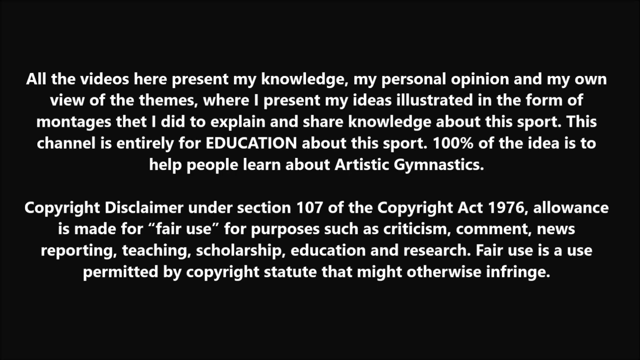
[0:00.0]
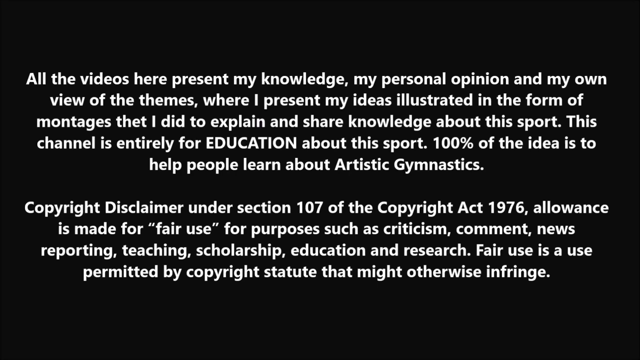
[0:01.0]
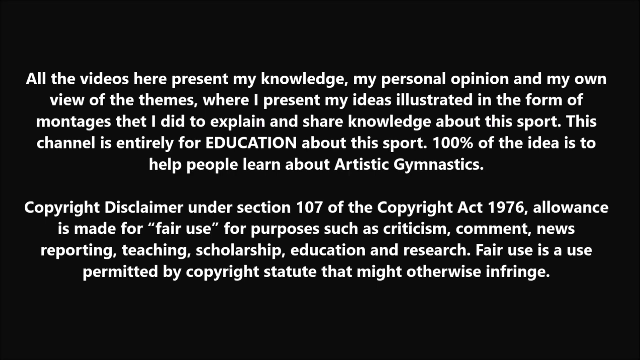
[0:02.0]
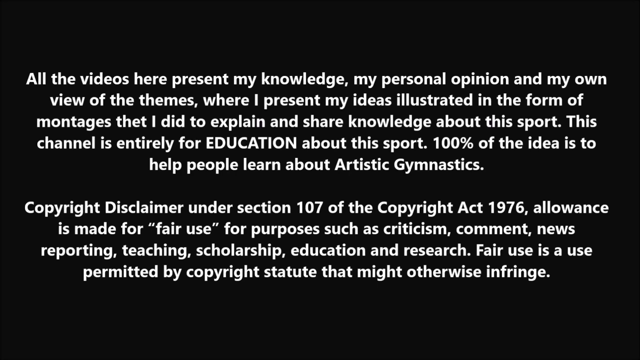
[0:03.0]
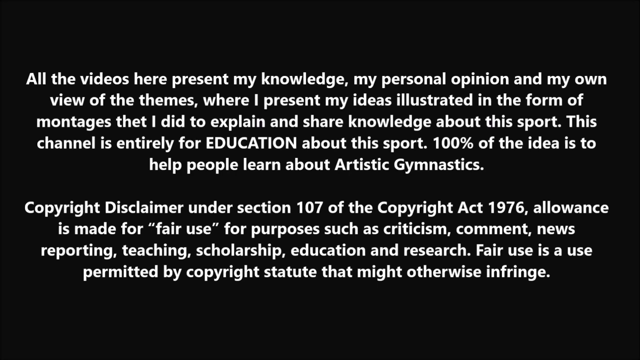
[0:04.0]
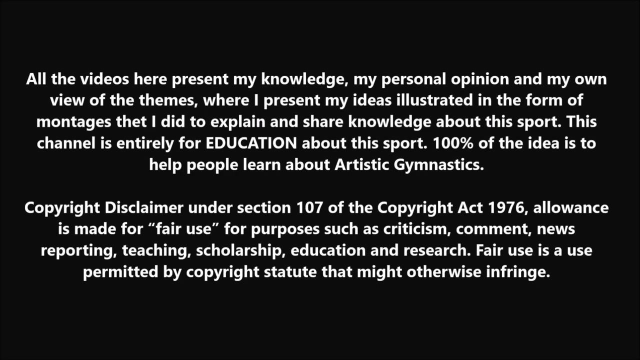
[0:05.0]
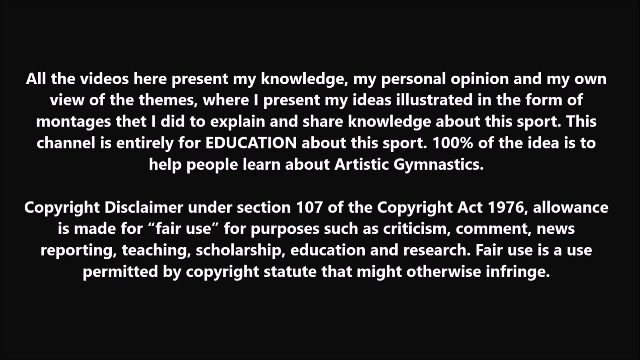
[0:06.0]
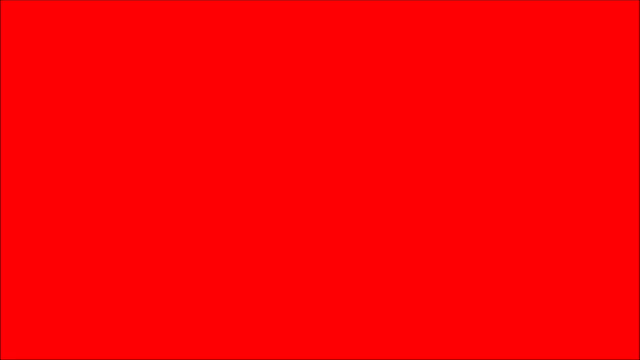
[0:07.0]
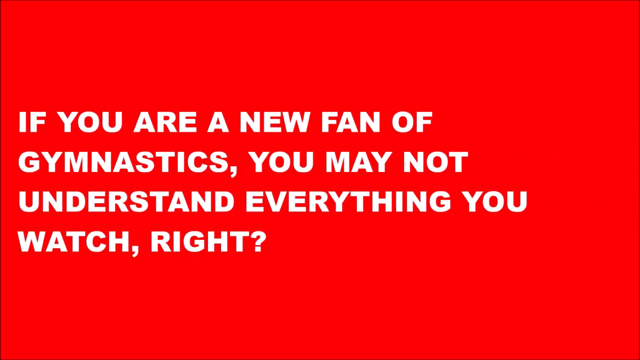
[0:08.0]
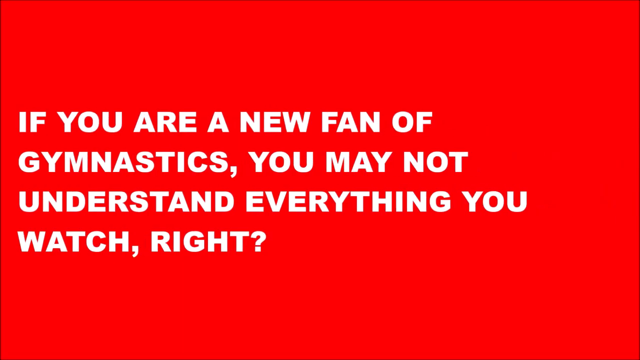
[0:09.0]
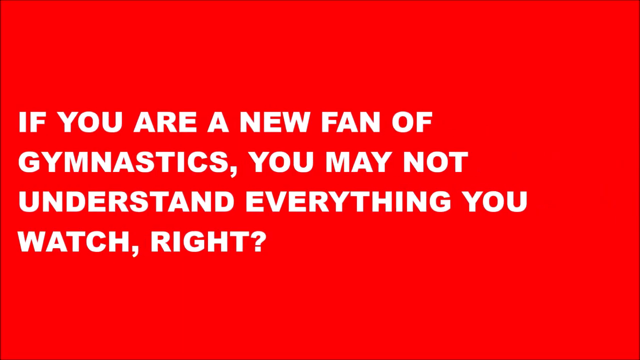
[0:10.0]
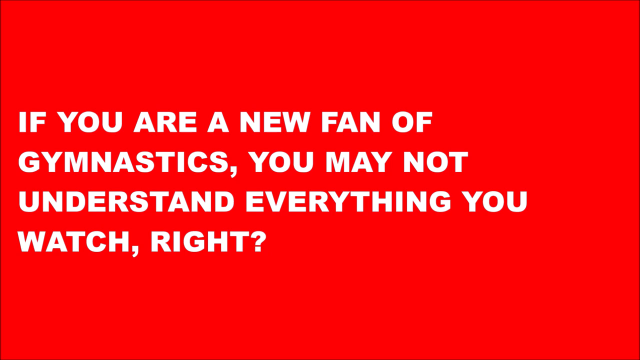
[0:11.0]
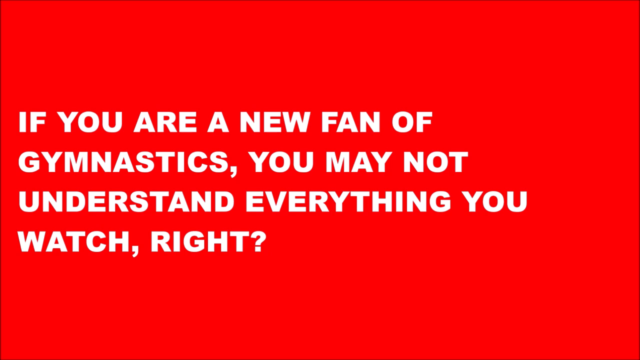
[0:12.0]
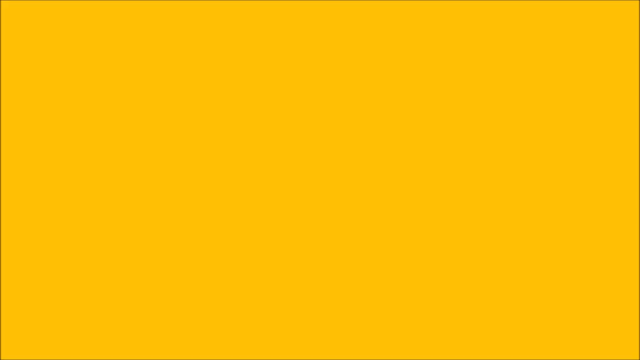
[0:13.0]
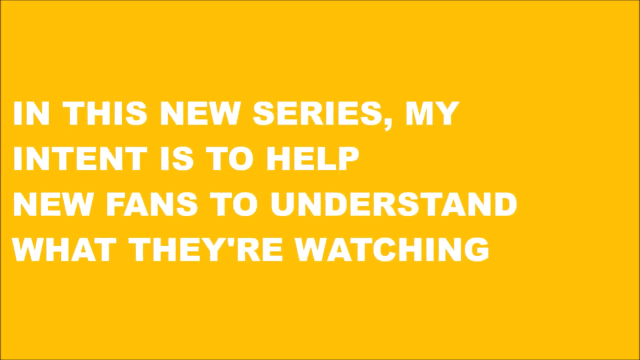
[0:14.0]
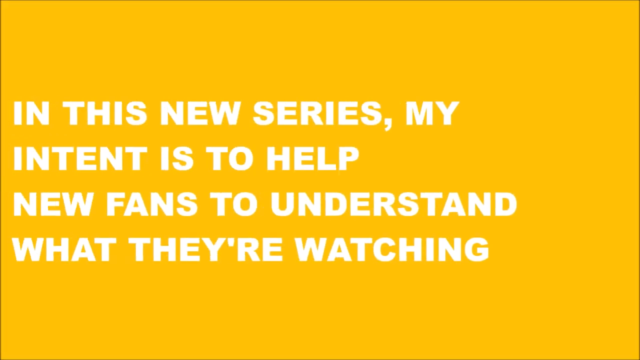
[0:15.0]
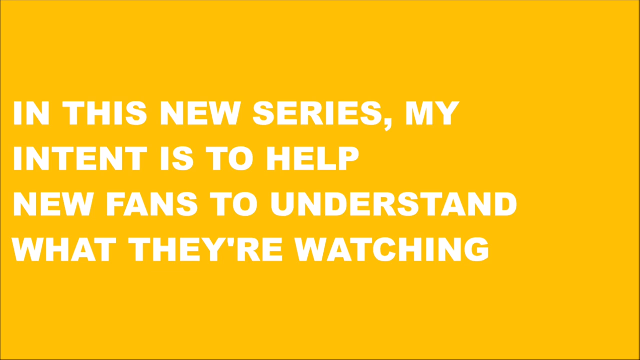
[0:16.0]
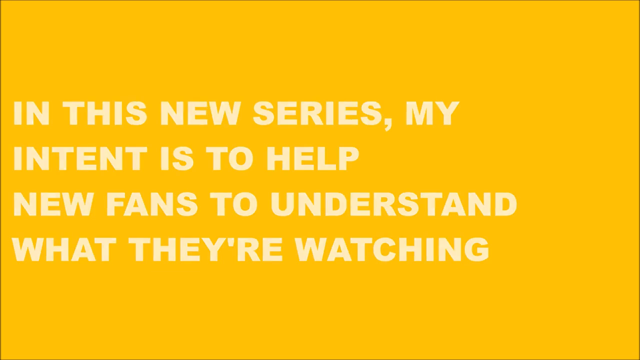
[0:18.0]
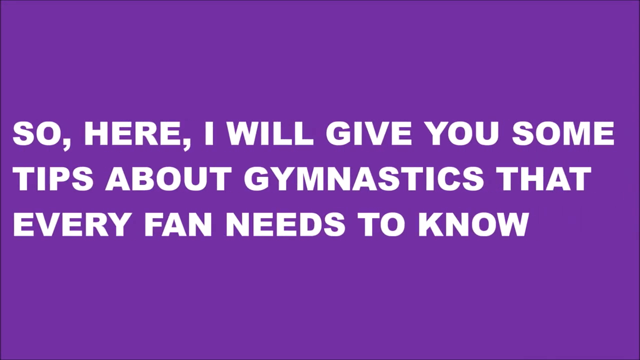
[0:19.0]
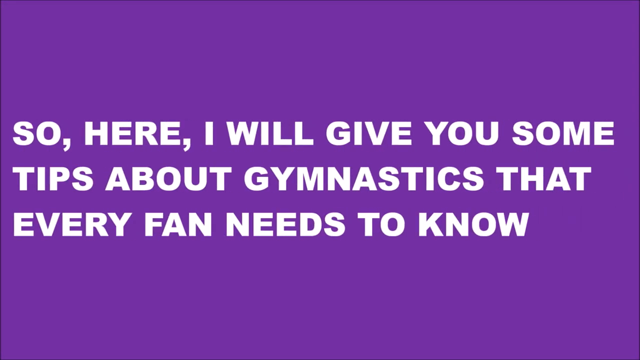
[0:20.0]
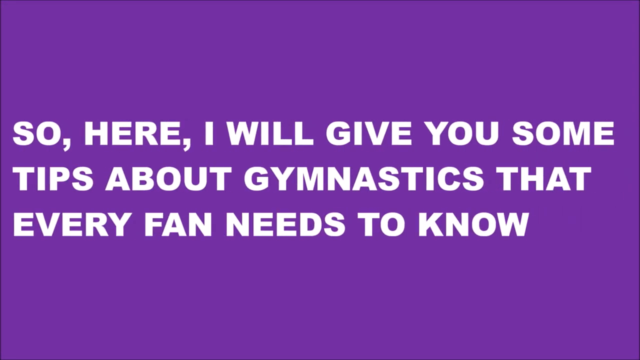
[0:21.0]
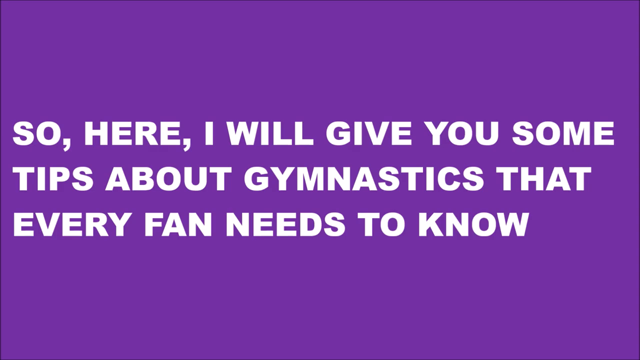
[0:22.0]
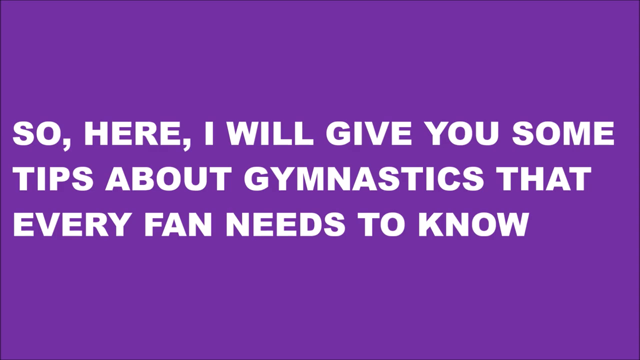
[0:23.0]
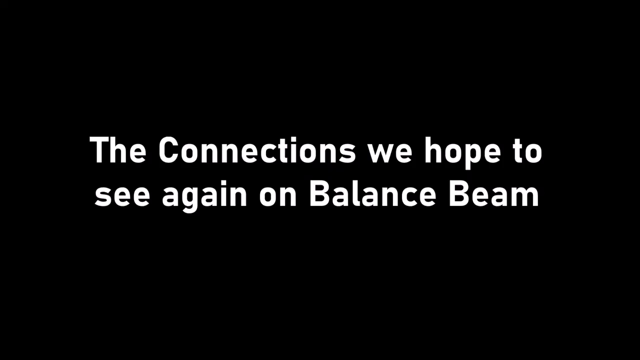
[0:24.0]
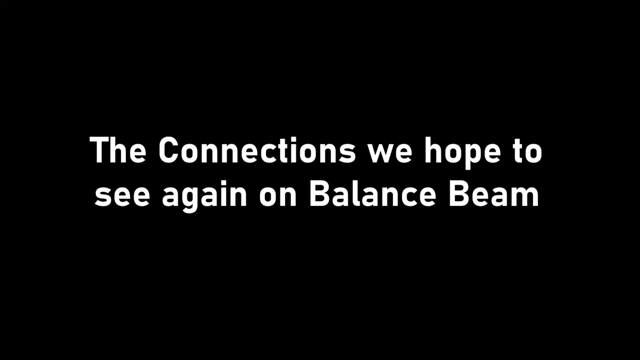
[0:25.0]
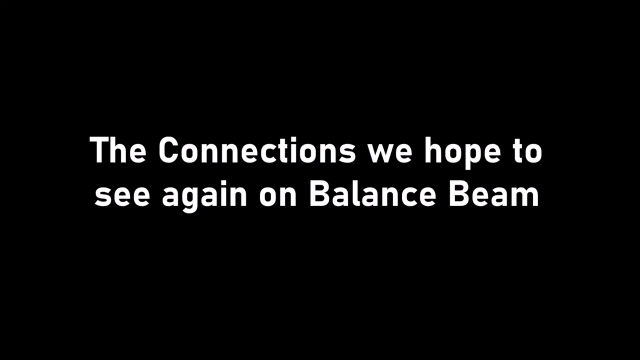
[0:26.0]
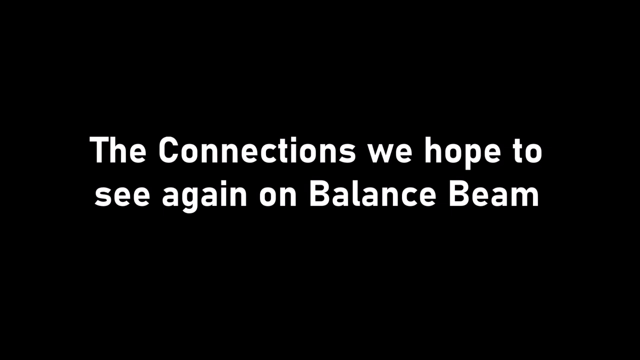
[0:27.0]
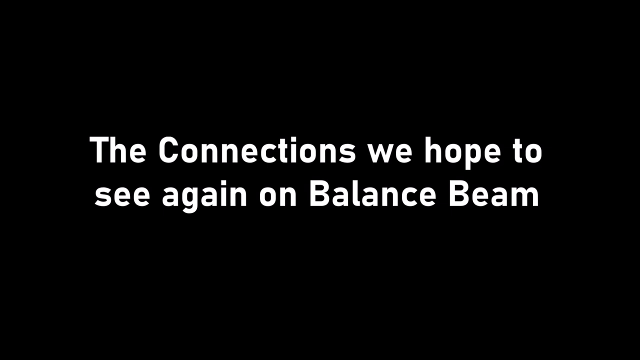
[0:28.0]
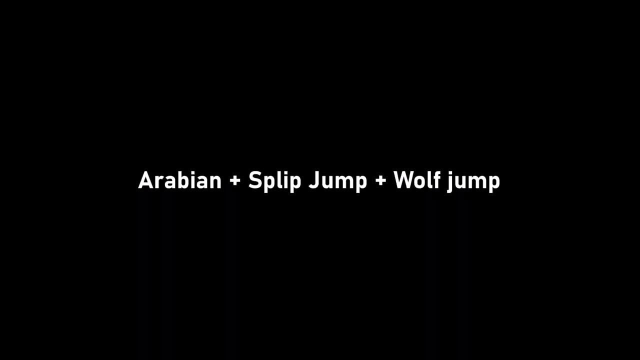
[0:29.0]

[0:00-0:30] The background is black and white. Text on the screen reads "all the videos here present my knowledge, my personal opinion and my own view of the themes where I present my ideas illustrated in the form of montages that I did to explain and share knowledge about this sport. This channel is entirely for education about this sport. 100% of the ideas to help people learn about artistic gymnastics." A copyright disclaimer referencing section 107 of the copyright act of 1976 follows, stating "allowances made for fair use for purposes such as criticism comment news reporting teaching scholarship education and research. Fair use is permitted by copyright statute that might otherwise infringe." Then the text reads "if you are a new fan of gymnastics, you may not understand everything you watch, right?" followed by "in this new series, my intent is to help new fans understand what they're watching. So here, I will give you some tips about gymnastics that every fan needs to know."